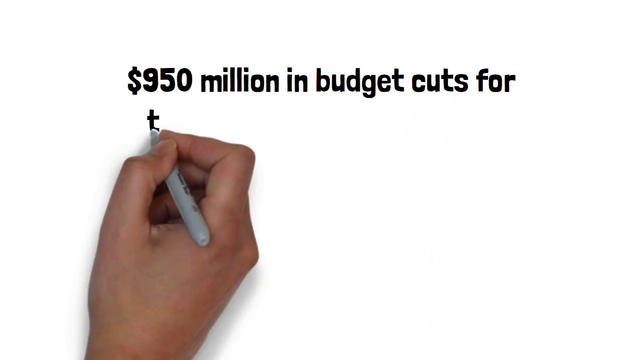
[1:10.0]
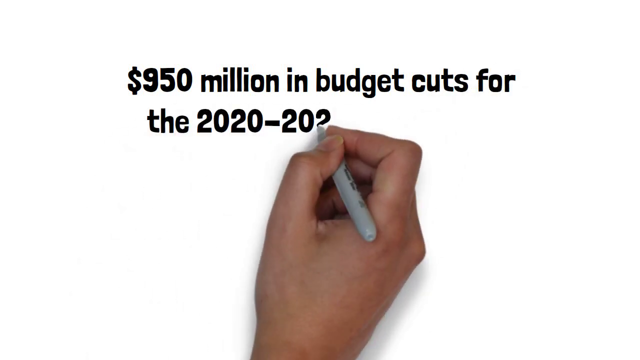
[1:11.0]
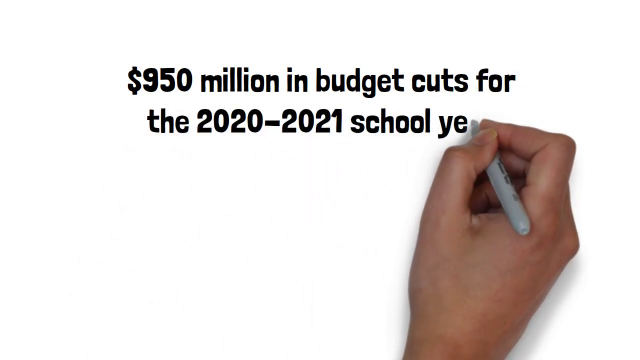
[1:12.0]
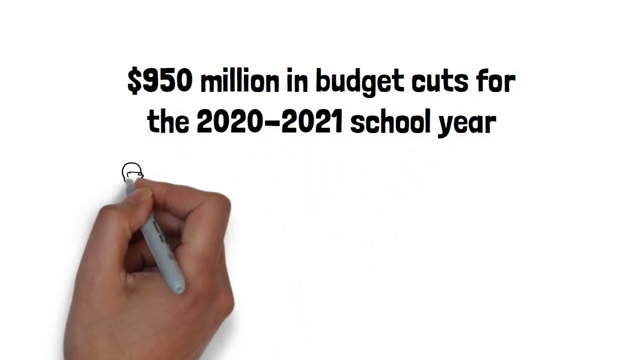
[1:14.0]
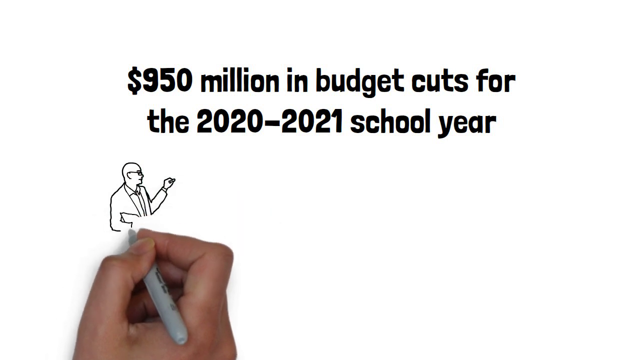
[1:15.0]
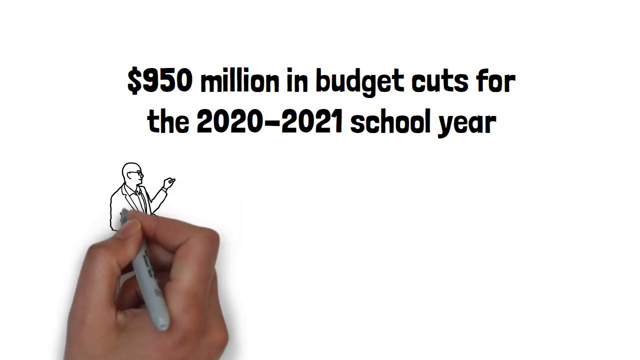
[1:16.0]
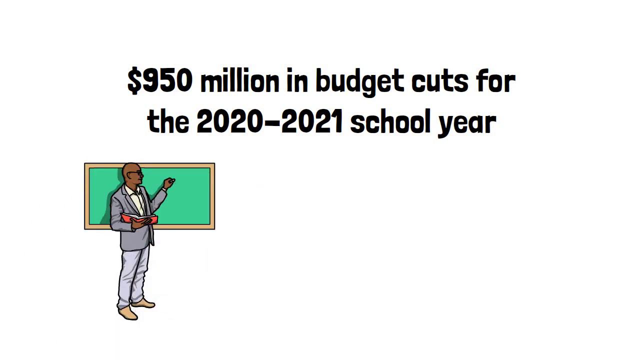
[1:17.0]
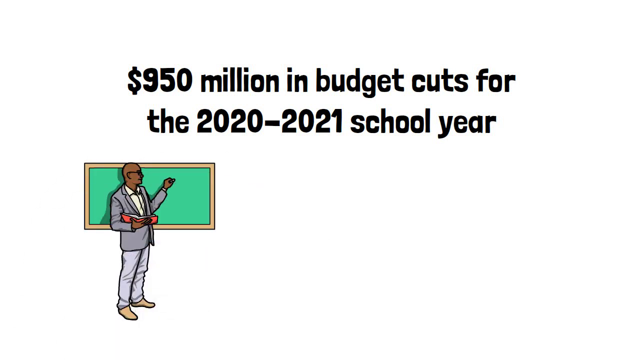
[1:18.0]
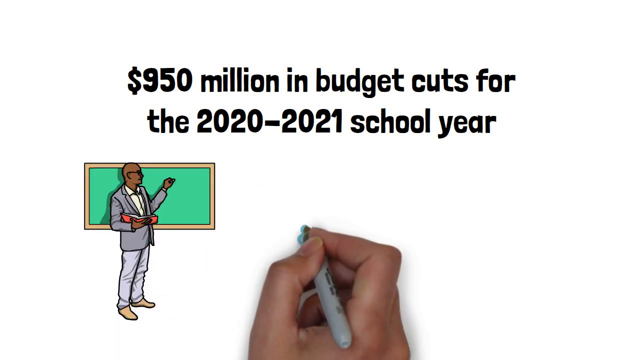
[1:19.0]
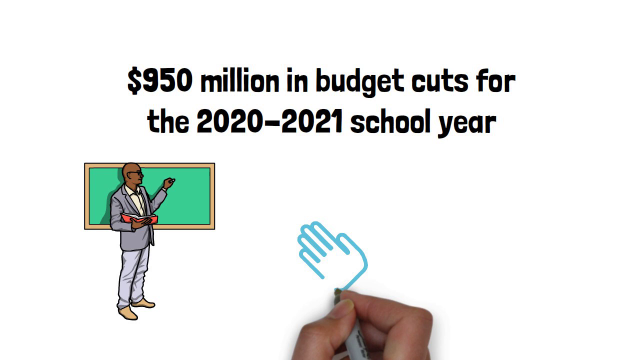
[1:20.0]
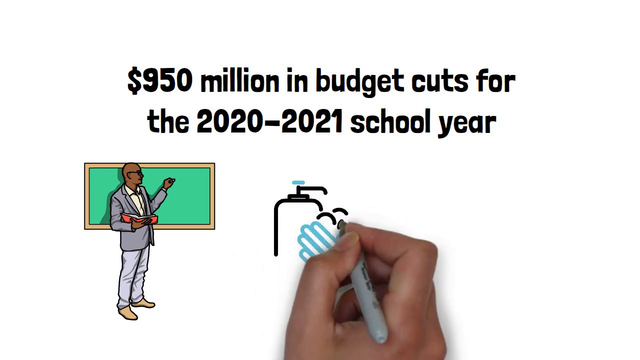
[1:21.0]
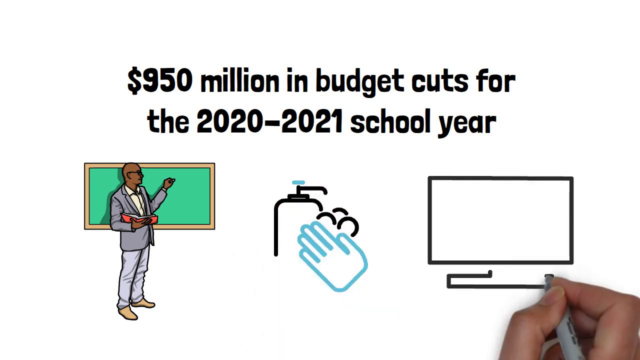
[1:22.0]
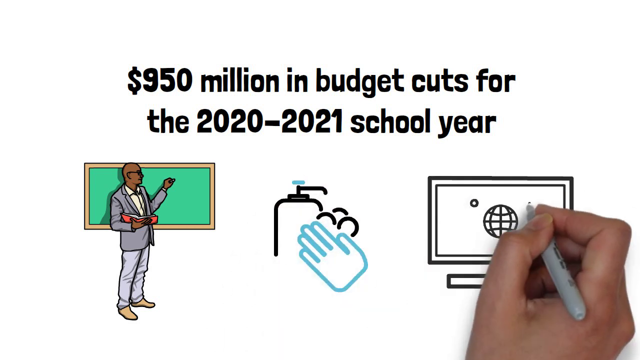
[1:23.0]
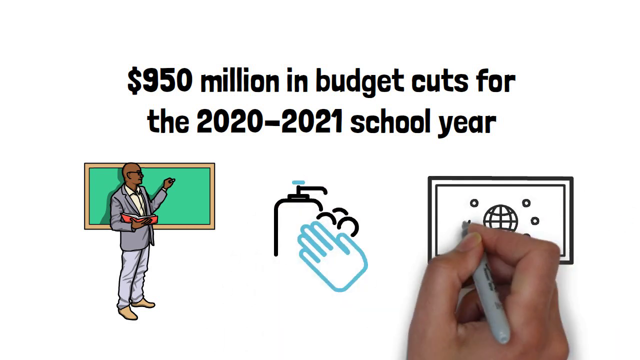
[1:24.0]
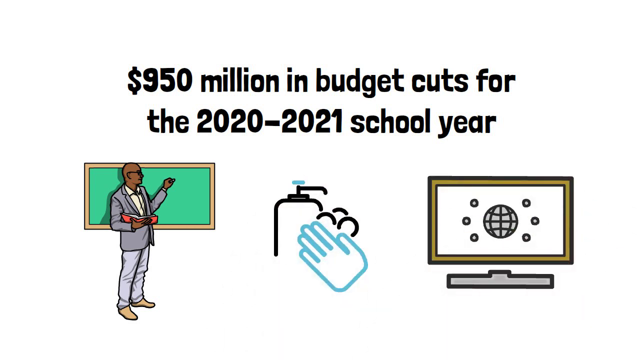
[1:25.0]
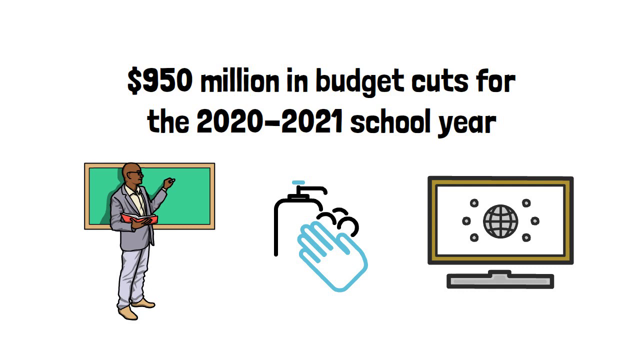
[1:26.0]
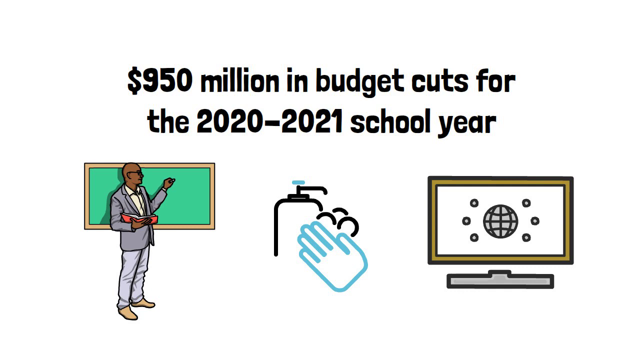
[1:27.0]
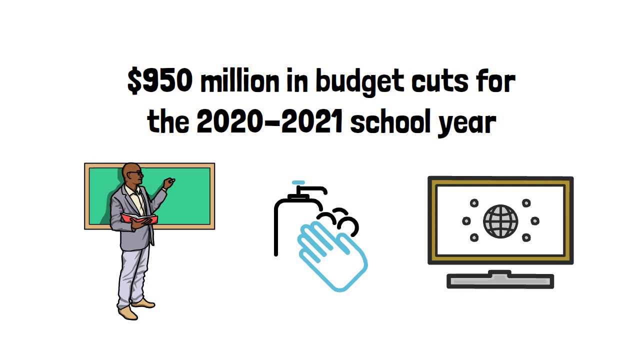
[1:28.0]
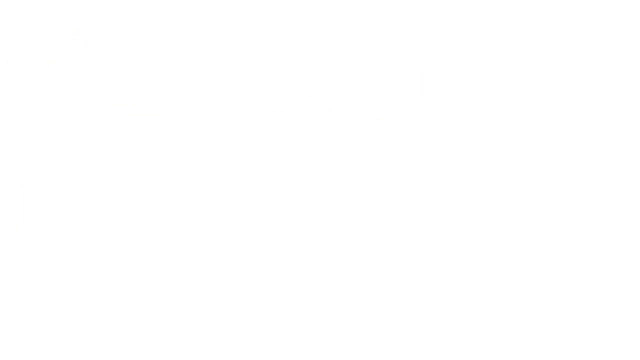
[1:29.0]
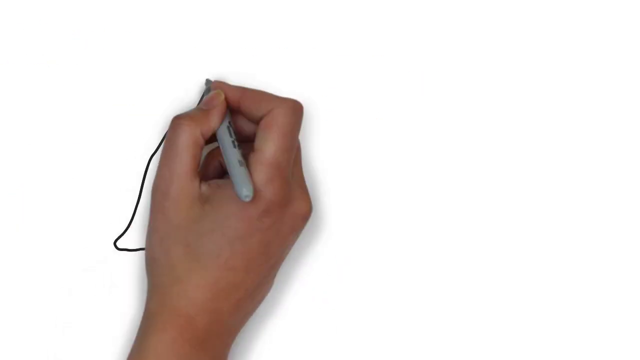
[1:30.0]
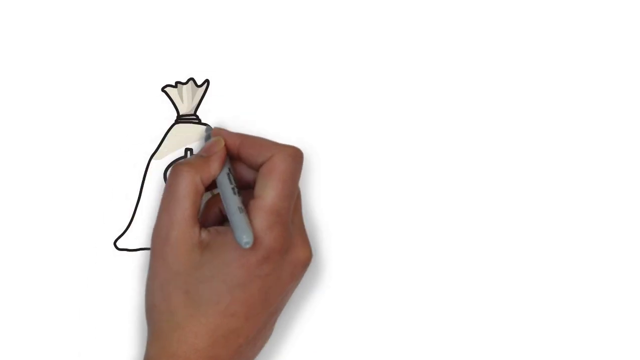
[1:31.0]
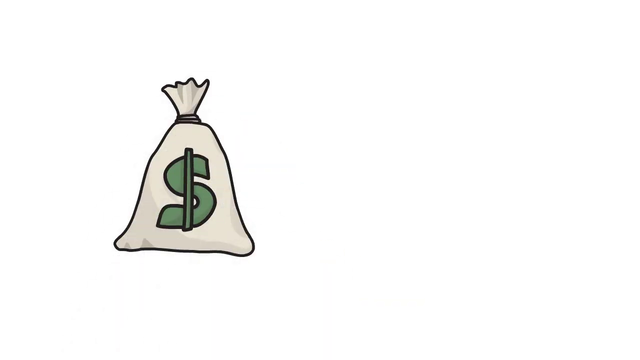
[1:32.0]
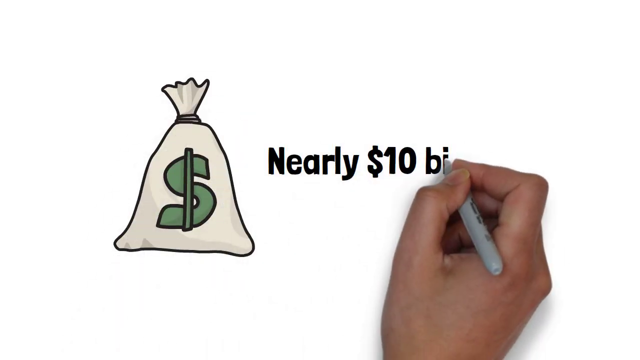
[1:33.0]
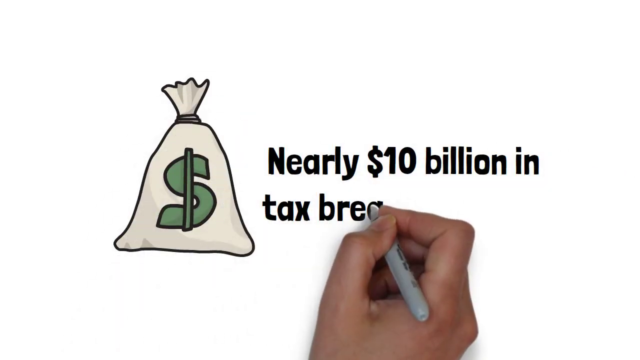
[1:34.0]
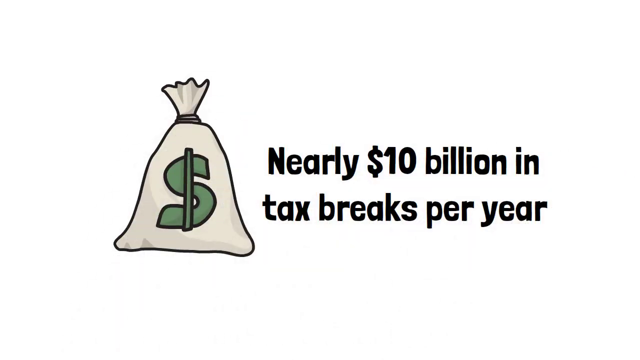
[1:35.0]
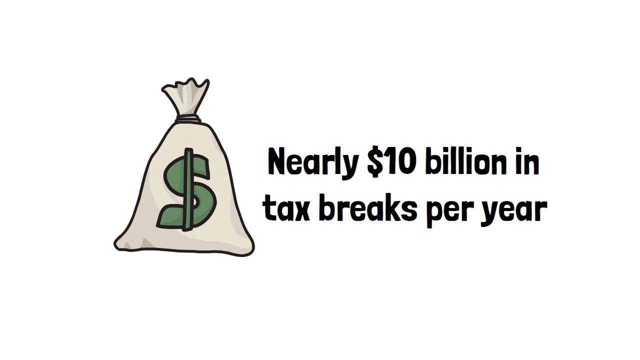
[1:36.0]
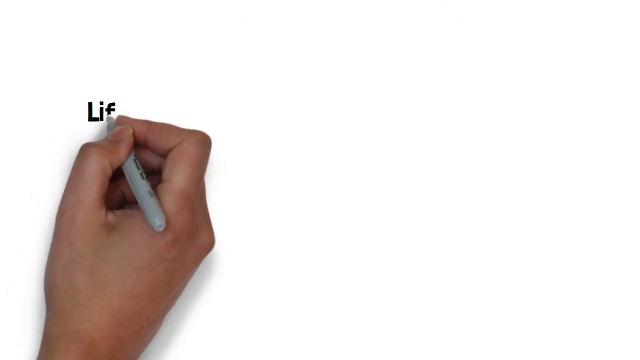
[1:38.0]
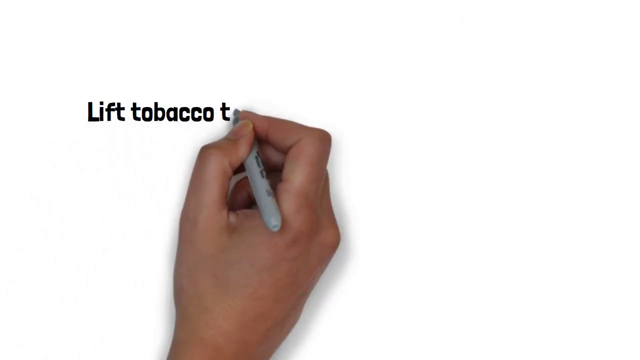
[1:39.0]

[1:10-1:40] The hand continues writing underneath the previous sentence: "the 2020-2021 school year." Below that, to the left, it draws a bald man in a suit, first in black and white and then colored in. Behind the man is a board: a perfect rectangle of green chalkboard with a brown border. To the right, the hand draws cartoon clip art of a hand in front of a soap bottle with some bubbles behind it. Further right, it draws a monitor with a globe symbol in the center and a few circles around it. All these graphics fly off to the left, leaving the screen white. The hand then draws a money bag in the middle left of the screen and colors it in, and beside it writes "nearly $10 billion in tax breaks per year." That graphic goes up off the screen, and the hand writes in the center "lift tobacco tax versus."